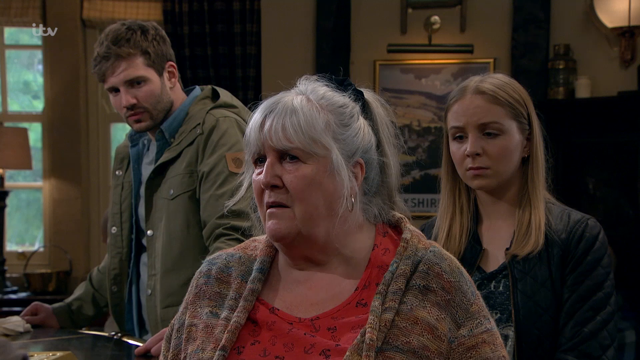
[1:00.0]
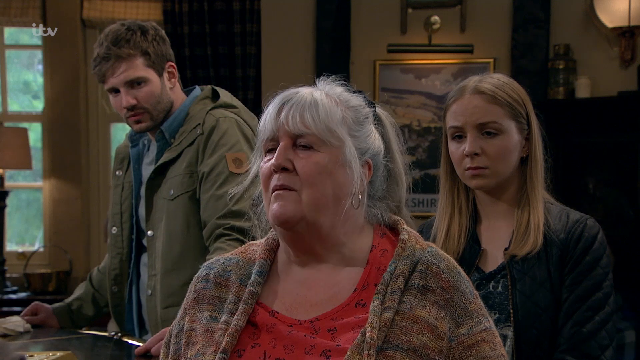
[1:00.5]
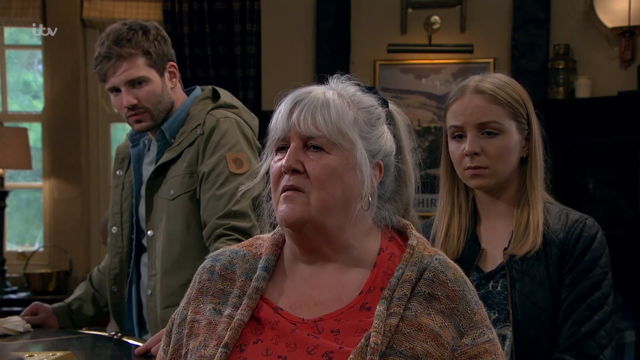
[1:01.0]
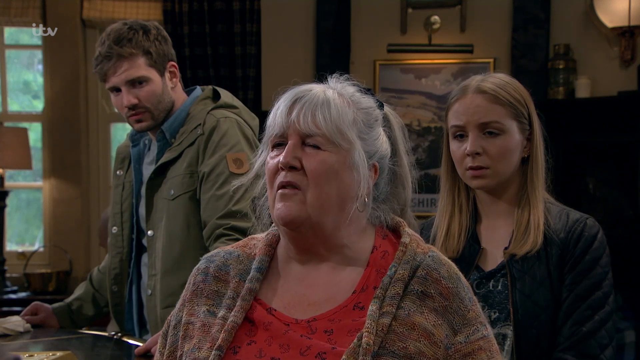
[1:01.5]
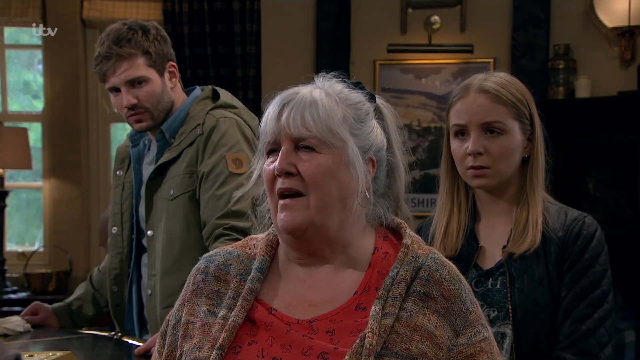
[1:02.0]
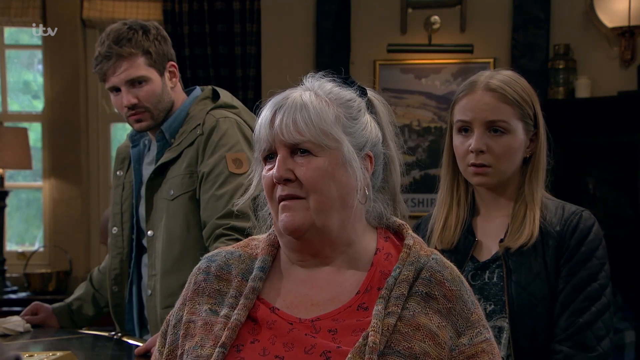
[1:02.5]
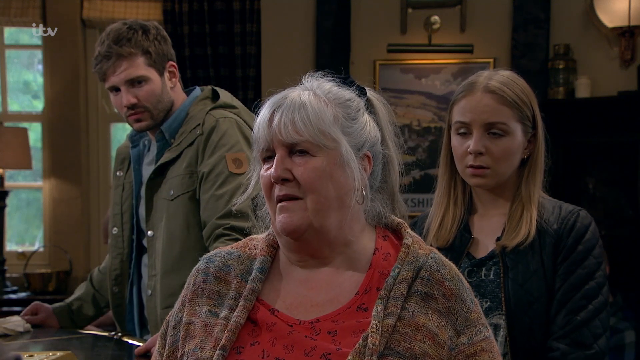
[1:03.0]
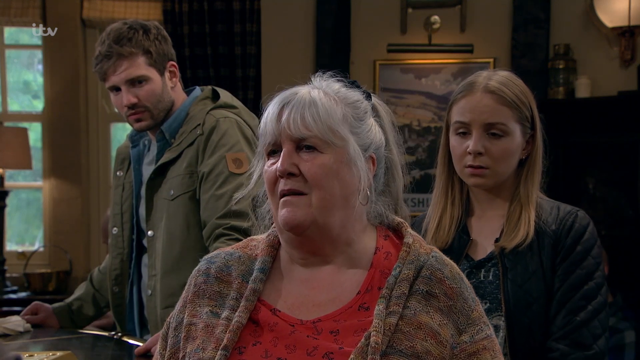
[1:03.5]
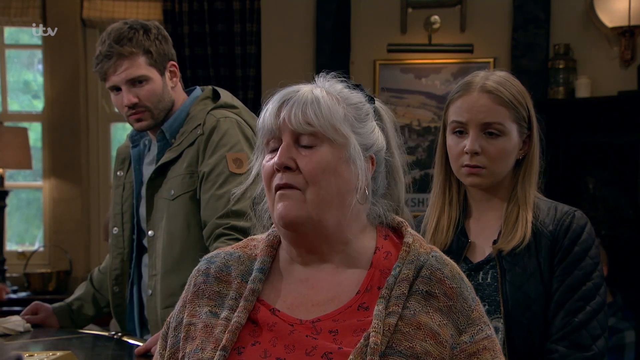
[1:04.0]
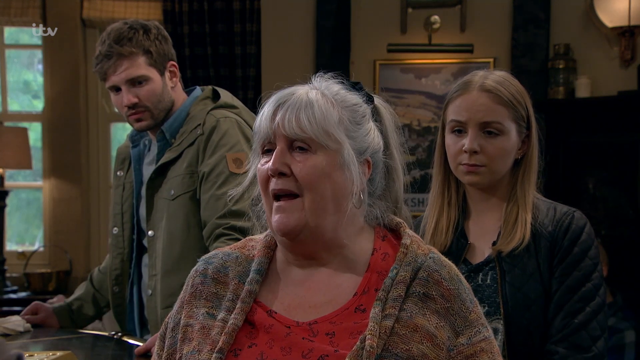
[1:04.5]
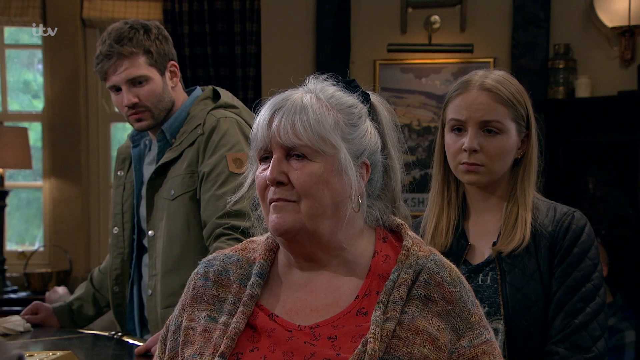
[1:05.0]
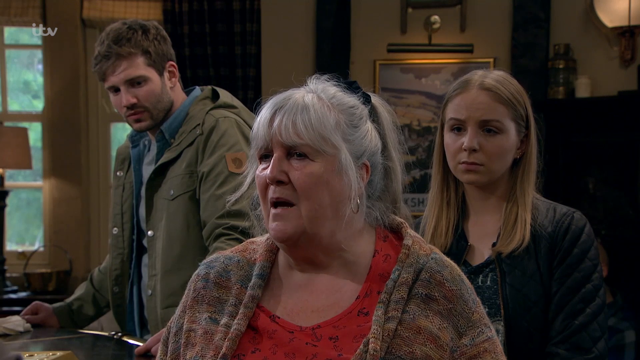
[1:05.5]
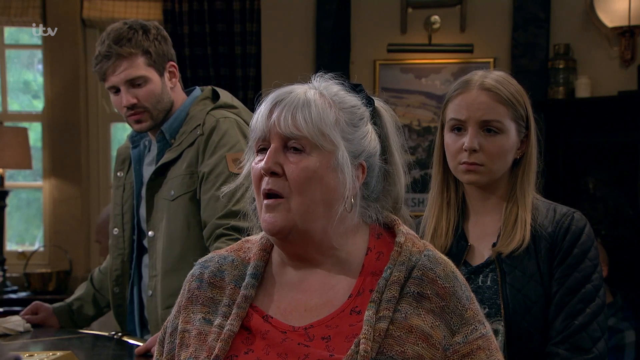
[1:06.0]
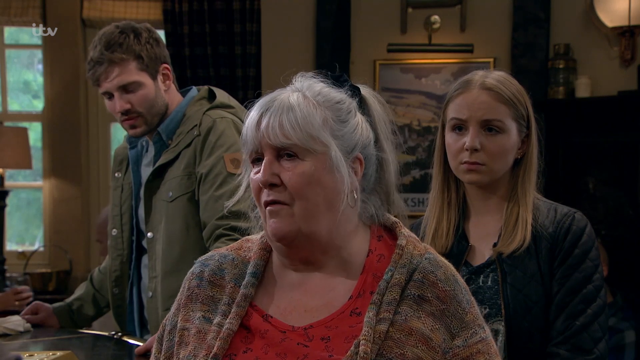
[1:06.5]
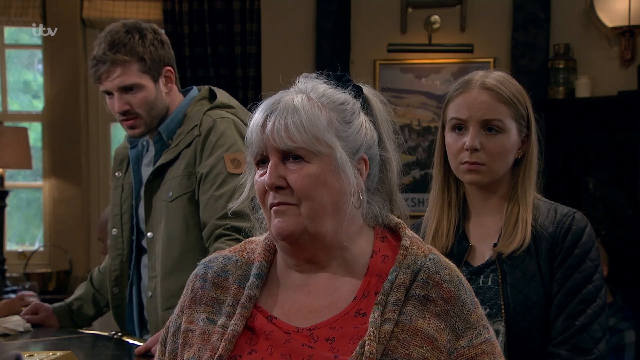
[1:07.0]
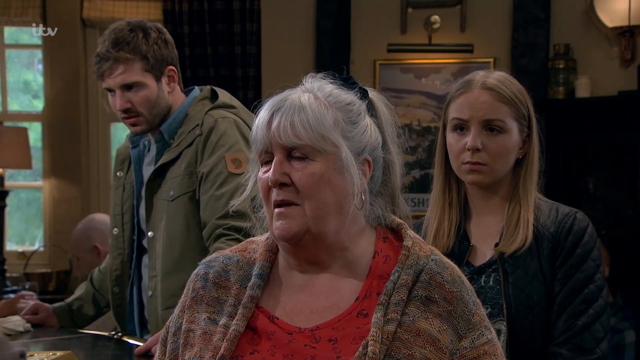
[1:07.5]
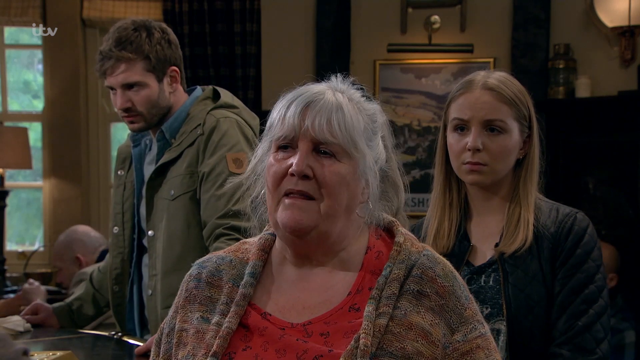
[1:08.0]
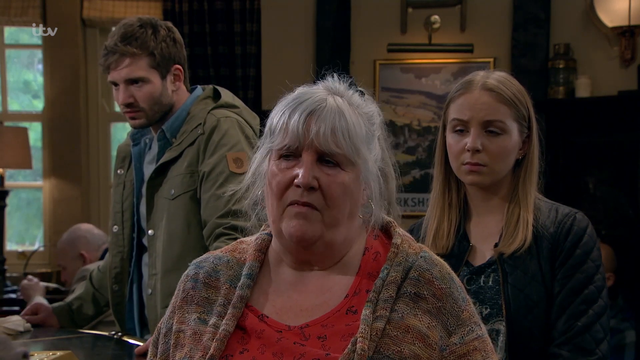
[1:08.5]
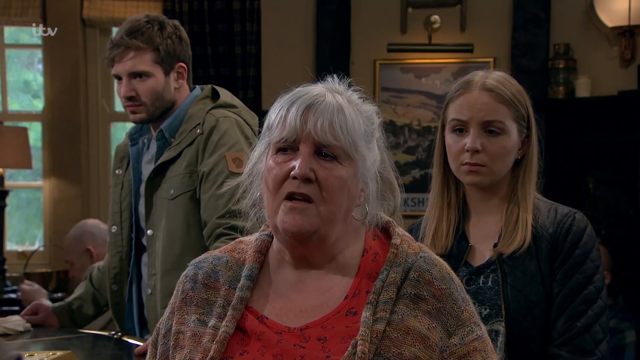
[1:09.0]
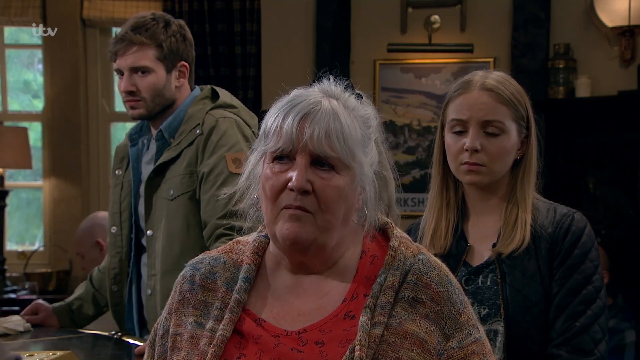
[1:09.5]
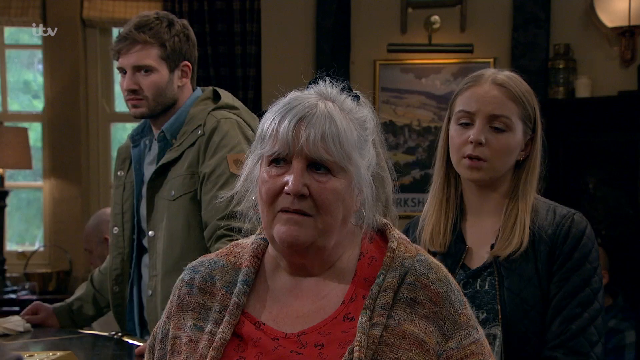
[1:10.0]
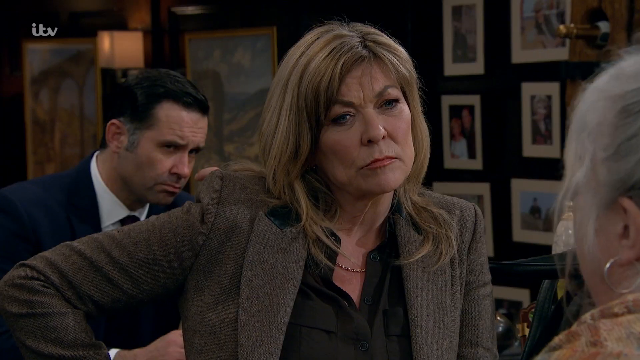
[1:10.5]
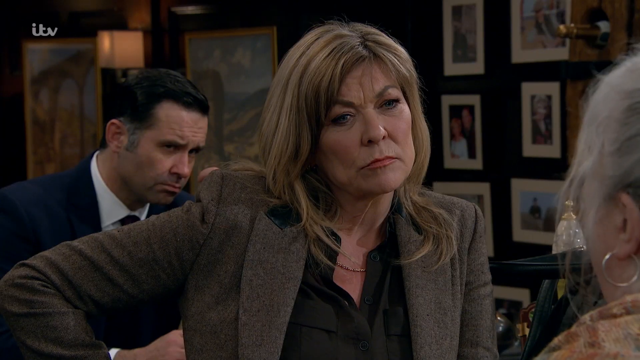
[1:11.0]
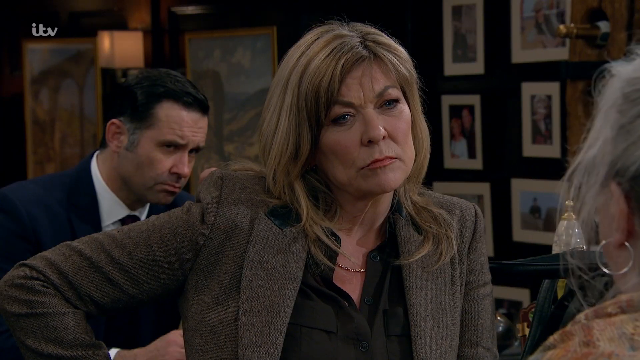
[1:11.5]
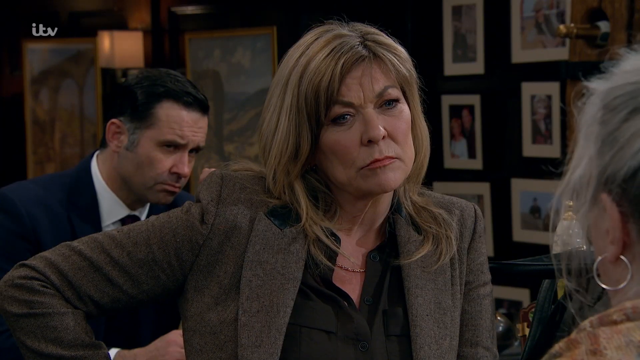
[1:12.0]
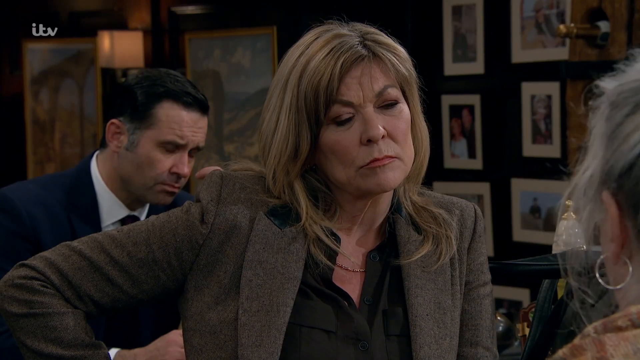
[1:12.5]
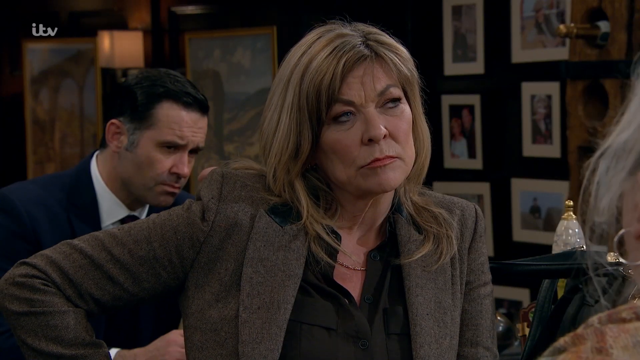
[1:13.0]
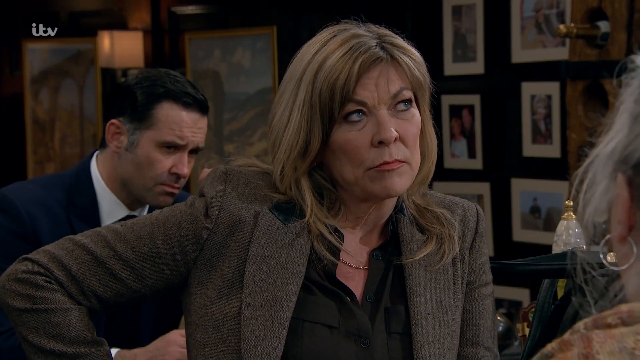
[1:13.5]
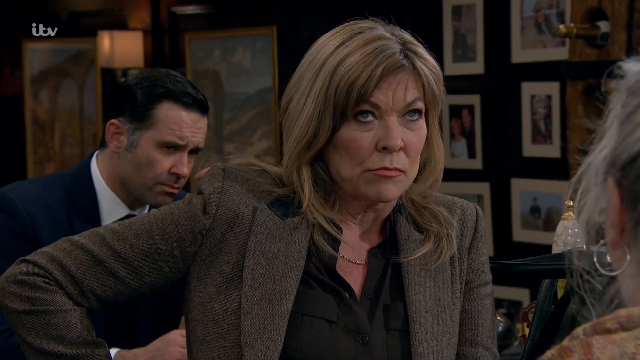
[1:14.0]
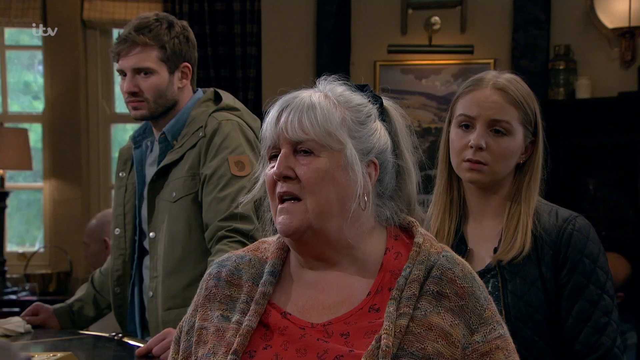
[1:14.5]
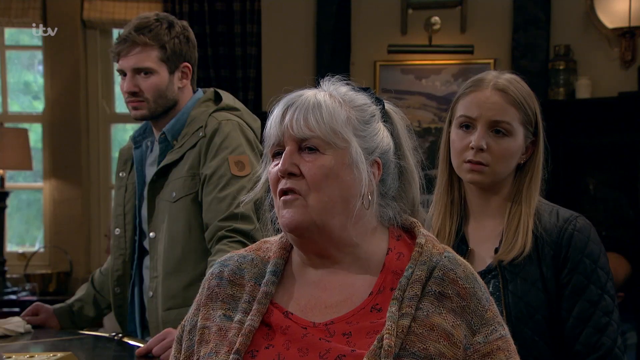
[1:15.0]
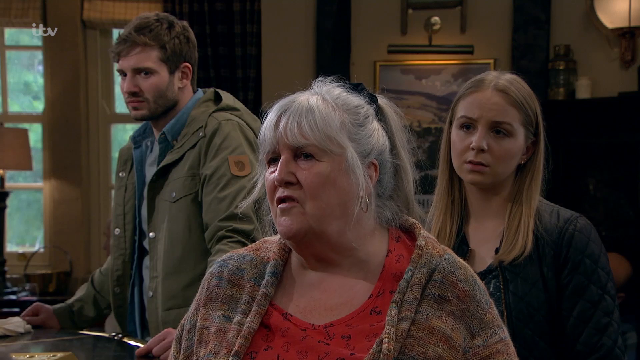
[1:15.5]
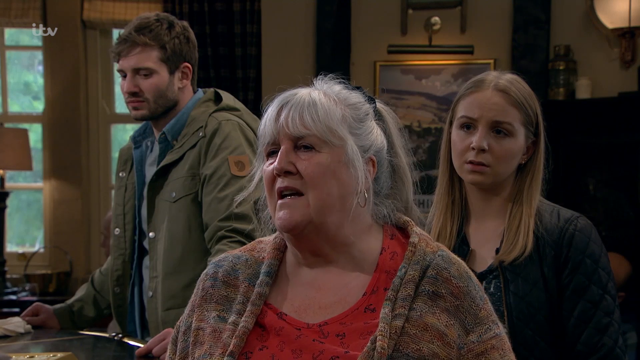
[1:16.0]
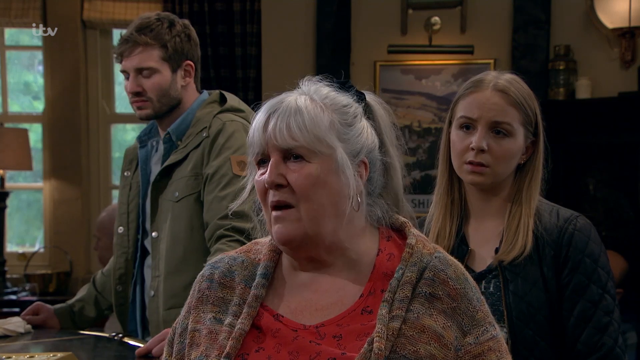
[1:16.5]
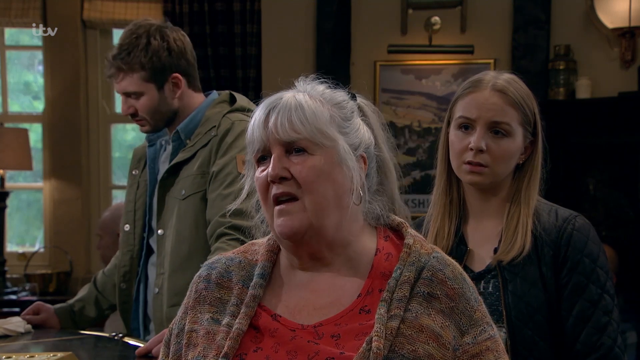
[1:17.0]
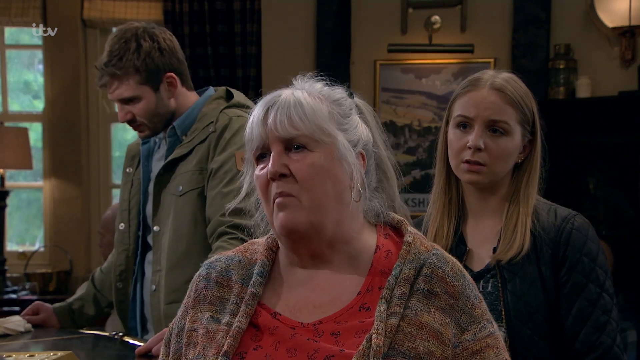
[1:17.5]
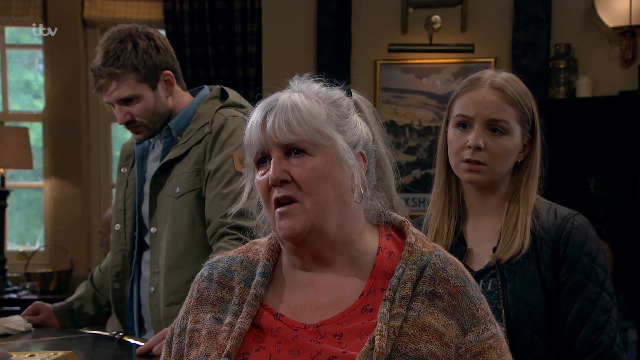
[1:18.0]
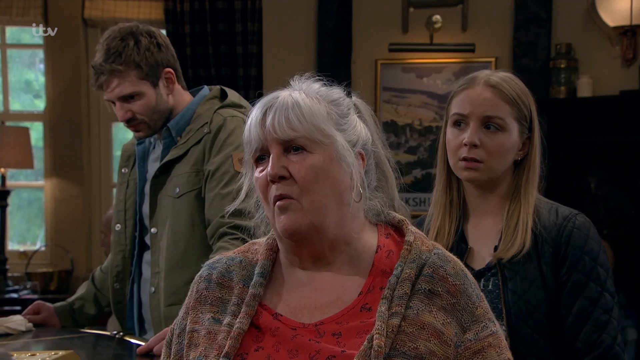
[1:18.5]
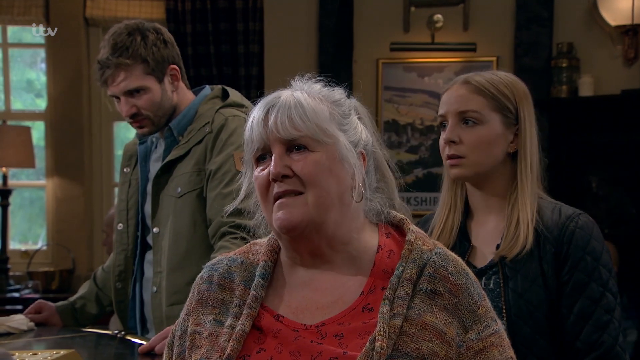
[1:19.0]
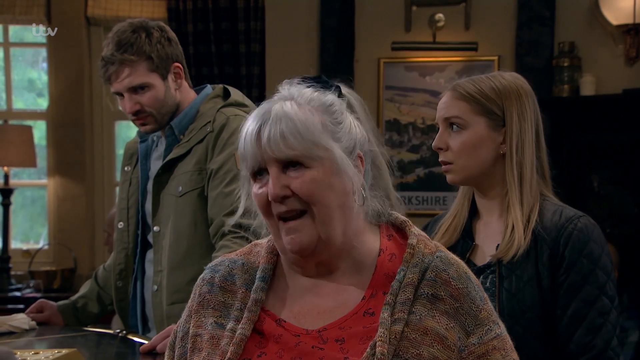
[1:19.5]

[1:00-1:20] The older woman is still talking, with the two people still behind her and a picture behind her. Another man, with a bald head, is behind the man in the green coat, eating something. The woman in her 50s glares at the older woman and rolls her eyes. The only change is this other patron at a table: his head pops up, he appears to be eating something, he goes down, and he puts a spoon in his mouth. The man in the blue suit is still behind the woman in her 50s, and the two women are still conversing inside with the two people behind the older woman. The place is some sort of bar or cafe, or maybe a pub.